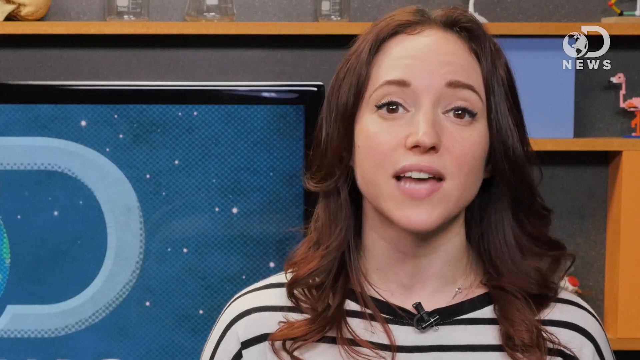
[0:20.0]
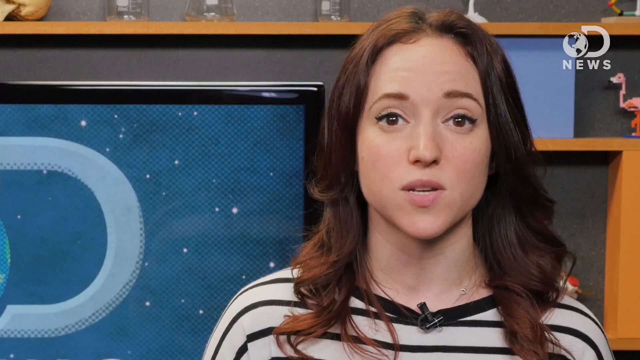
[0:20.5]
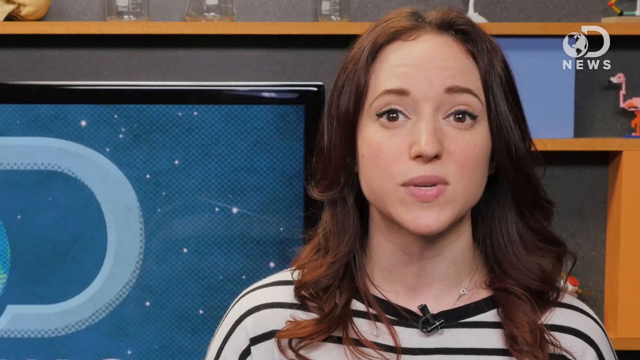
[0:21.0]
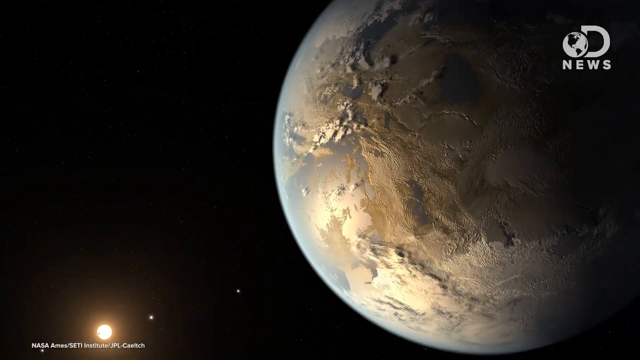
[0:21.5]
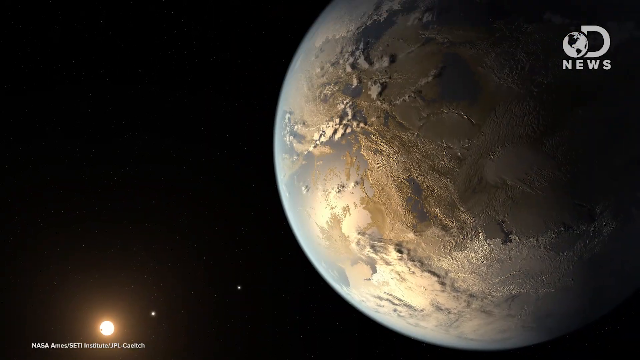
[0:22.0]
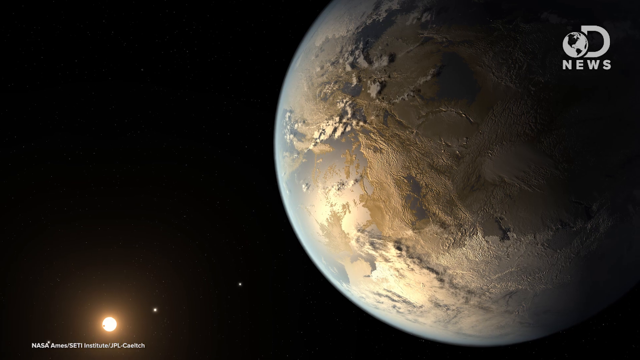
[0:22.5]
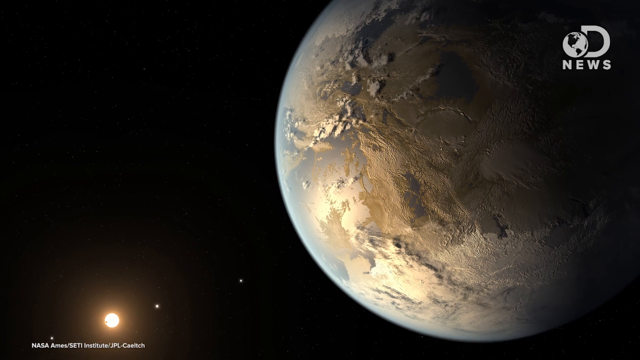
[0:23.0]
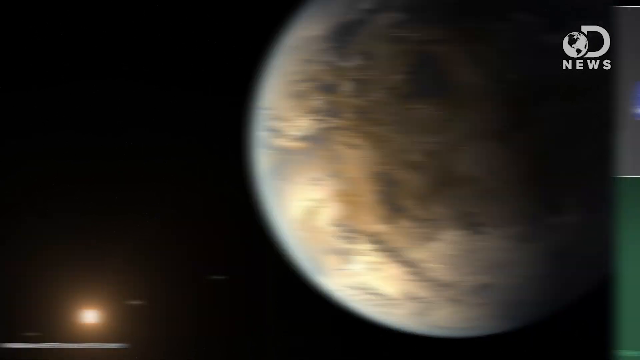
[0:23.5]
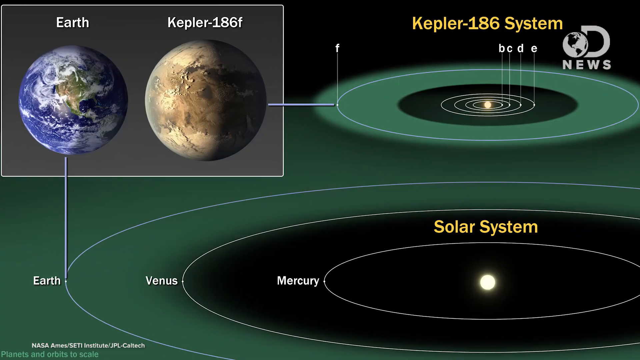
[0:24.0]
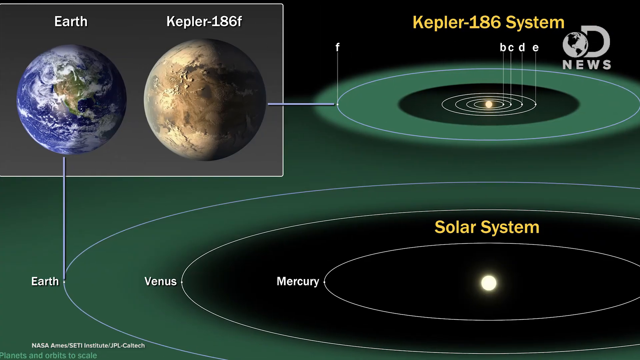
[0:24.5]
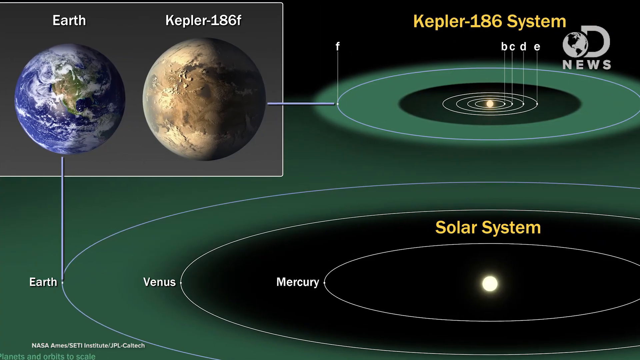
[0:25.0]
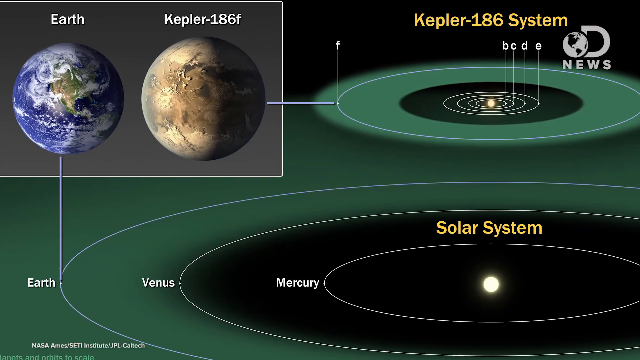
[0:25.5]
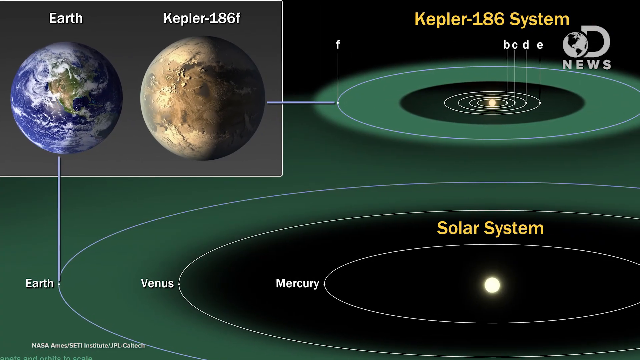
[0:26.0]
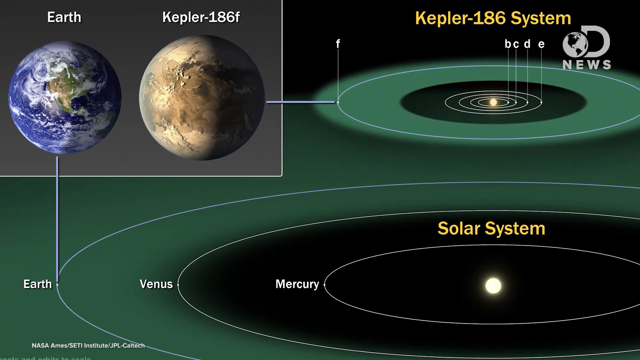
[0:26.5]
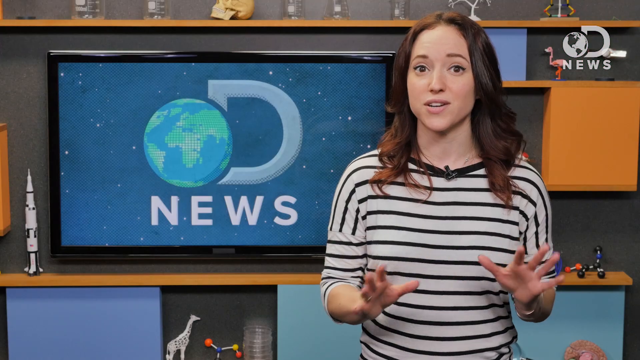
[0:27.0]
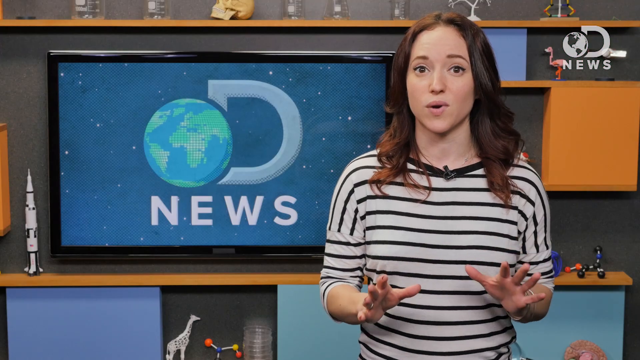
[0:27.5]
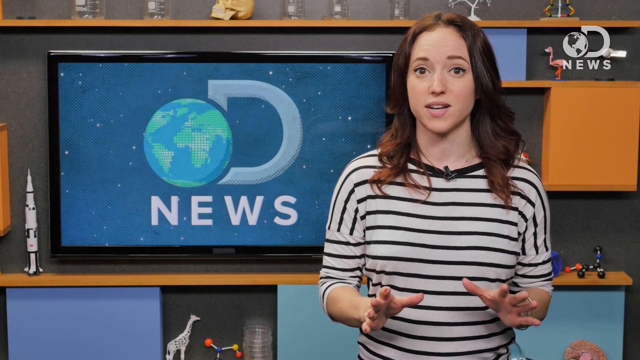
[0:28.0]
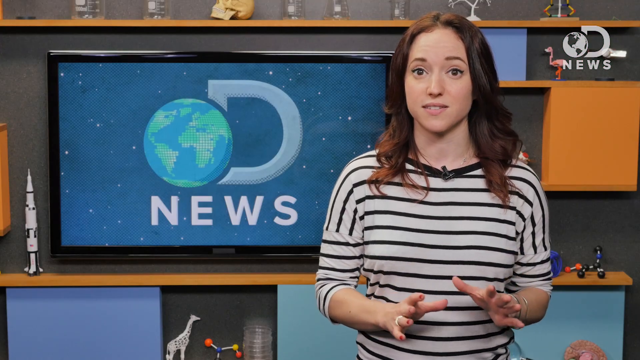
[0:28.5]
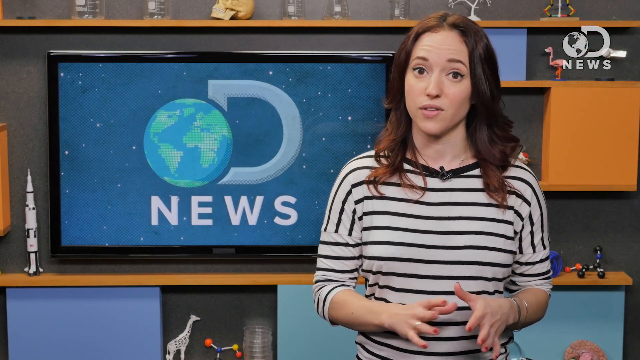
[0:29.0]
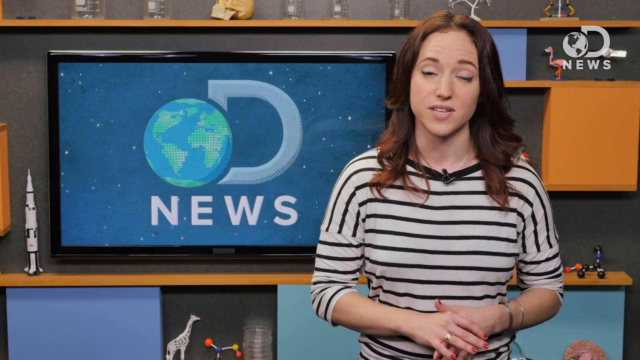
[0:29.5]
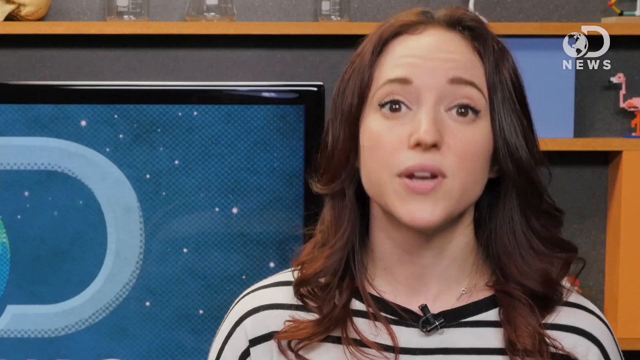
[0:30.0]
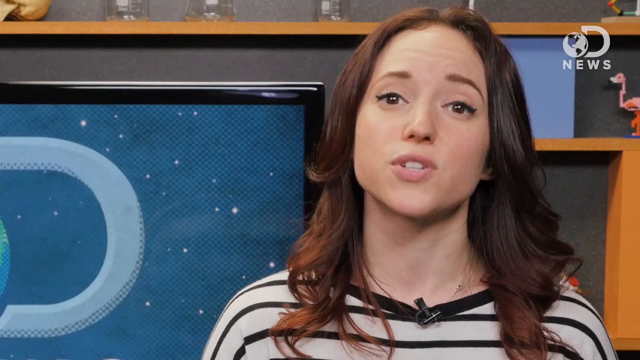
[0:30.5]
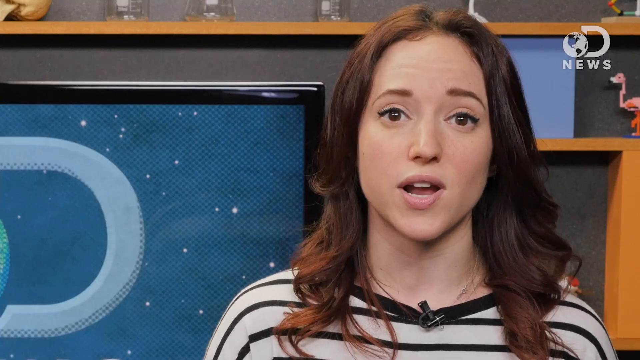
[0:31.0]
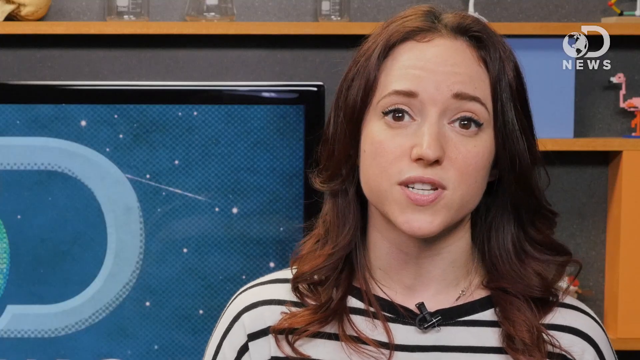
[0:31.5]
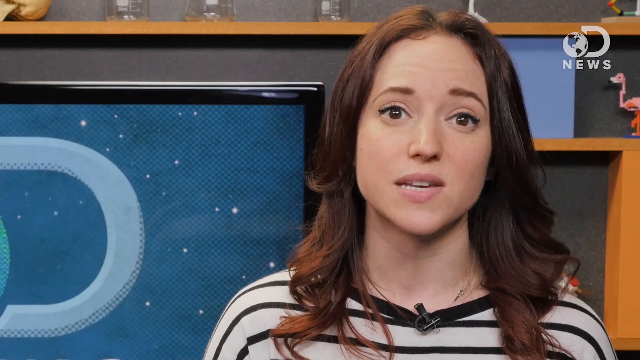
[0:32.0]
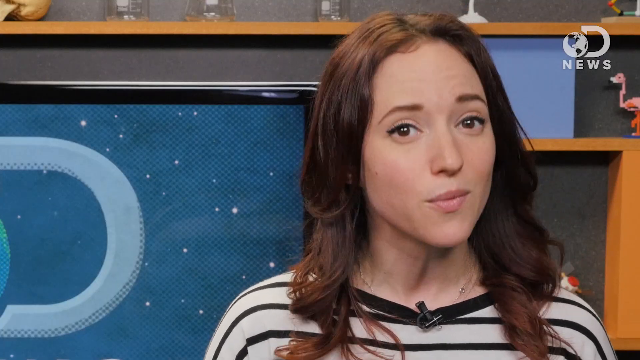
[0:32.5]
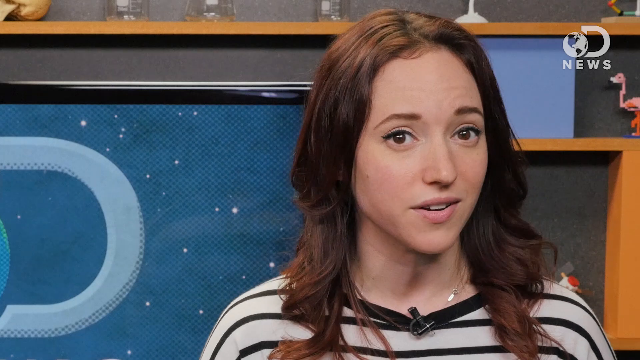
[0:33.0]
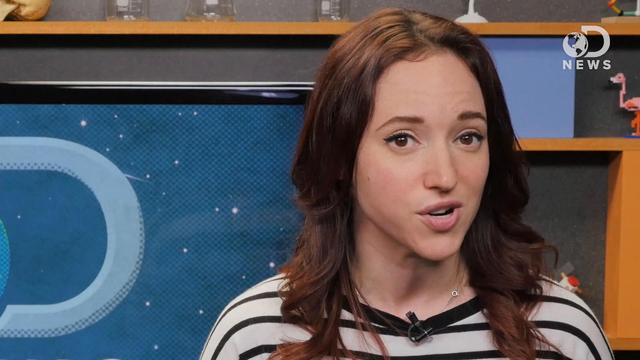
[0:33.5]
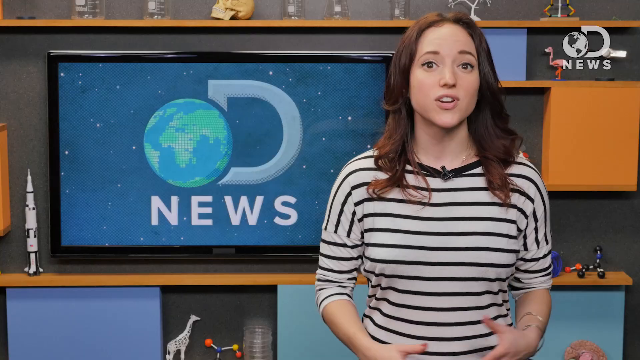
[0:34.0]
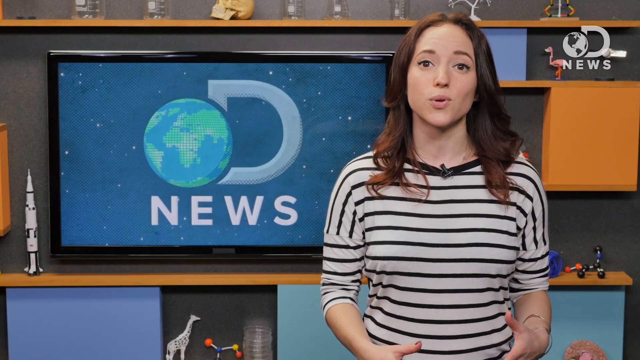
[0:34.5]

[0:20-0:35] The presenter speaks in front of the same studio backdrop. The view then switches to an image of a rocky-surfaced planet in outer space with the sun behind it; which planet it is is unclear, though it could be Earth. Next comes a diagram with images from outer space. A square in the upper left says "Earth" and "Kepler 186F," comparing Earth to another rocky planet. Taking up most of the diagram's background is an image of our solar system, and above it a solar system for Kepler 186F, the planet being compared to Earth; the diagram seems to compare the two. "Subscribe" is written in white in the lower right of the screen, and the DNews logo, a capital D with a globe to its left and the word "News" underneath, is in the upper right. Both the diagram and the close-up of the planet are in color.